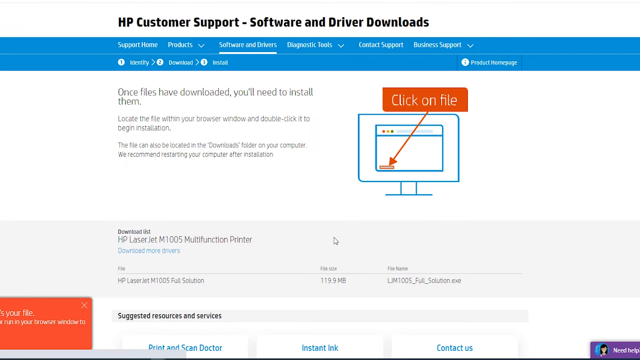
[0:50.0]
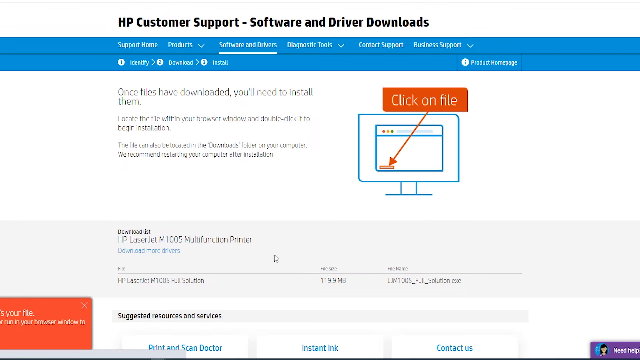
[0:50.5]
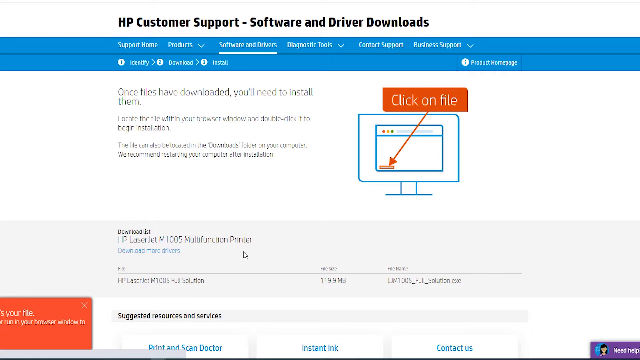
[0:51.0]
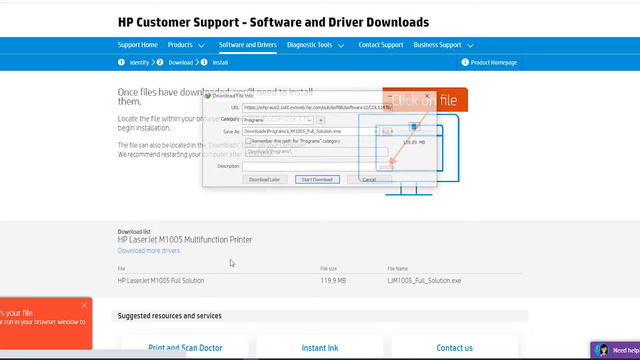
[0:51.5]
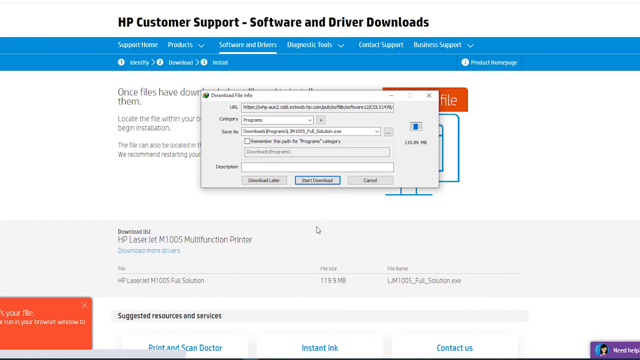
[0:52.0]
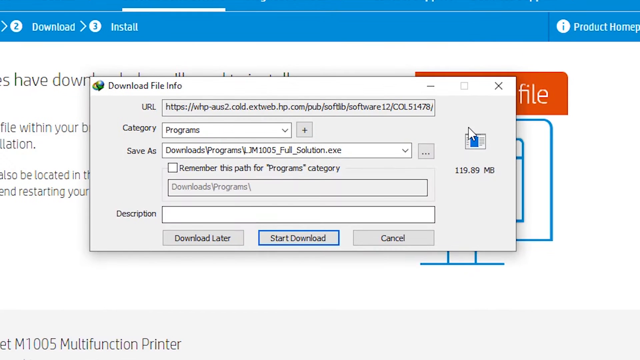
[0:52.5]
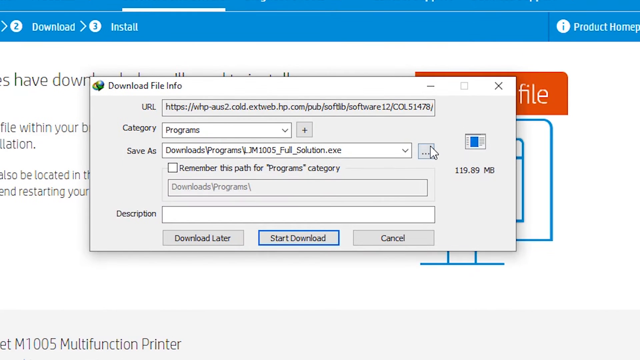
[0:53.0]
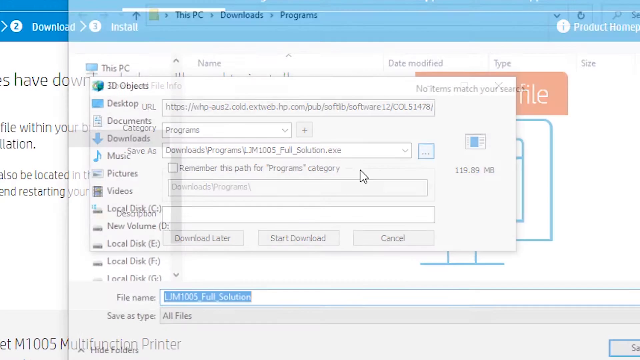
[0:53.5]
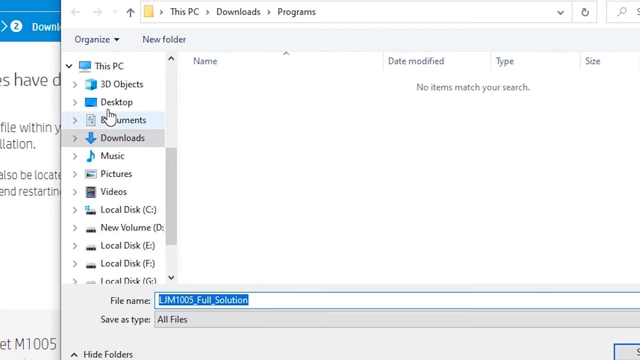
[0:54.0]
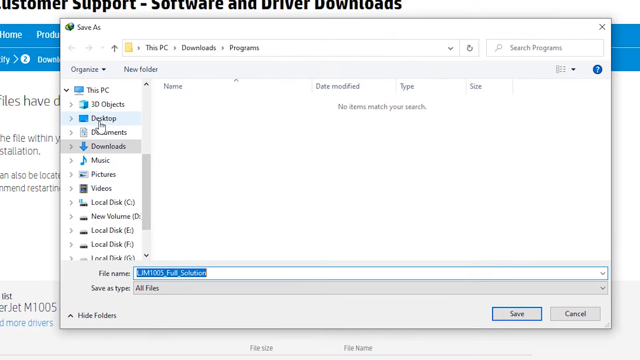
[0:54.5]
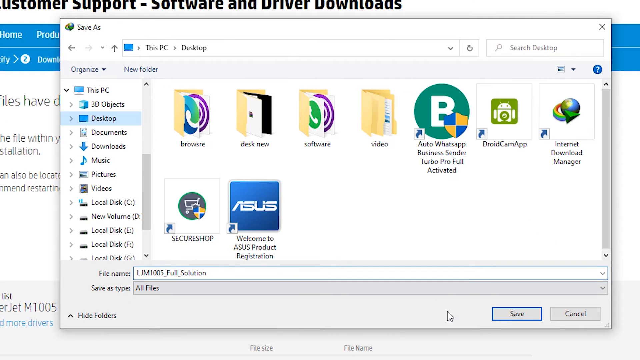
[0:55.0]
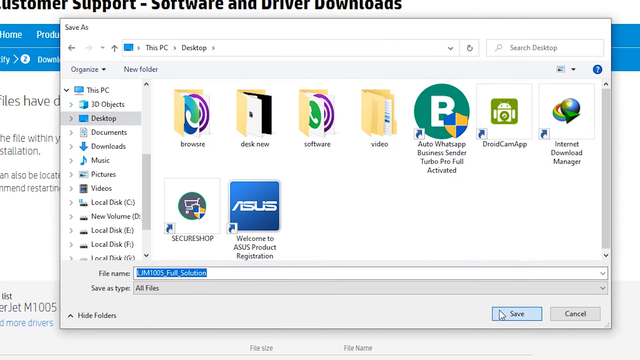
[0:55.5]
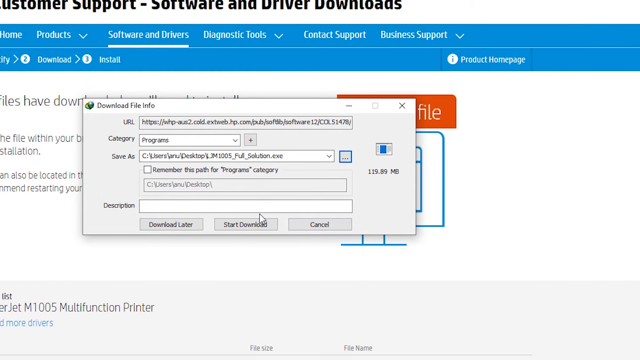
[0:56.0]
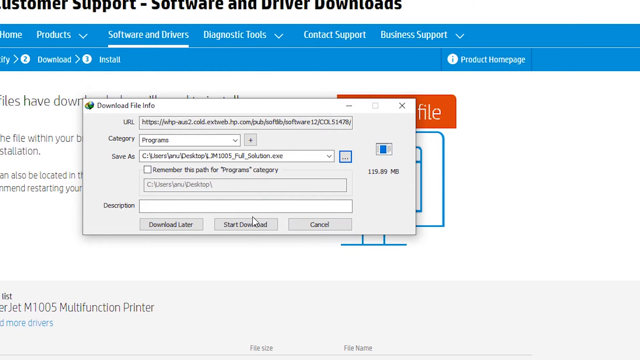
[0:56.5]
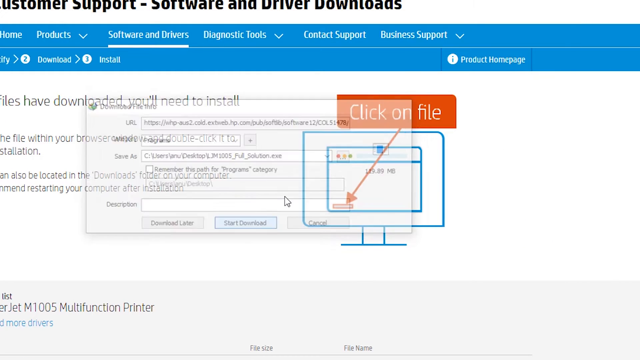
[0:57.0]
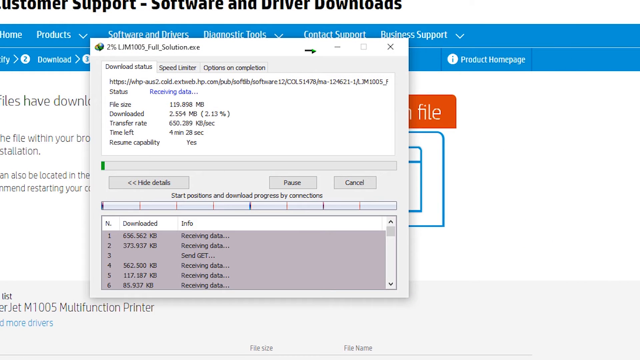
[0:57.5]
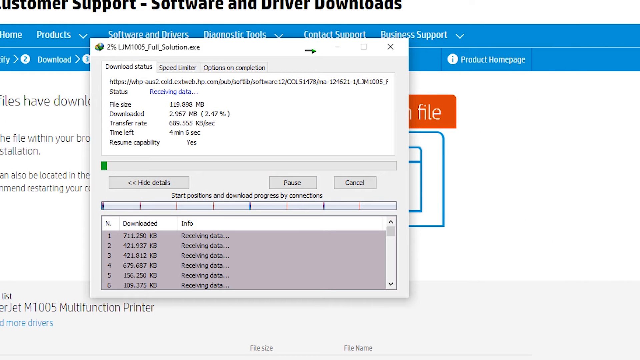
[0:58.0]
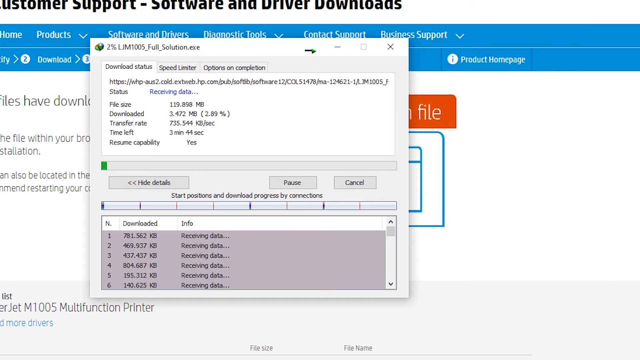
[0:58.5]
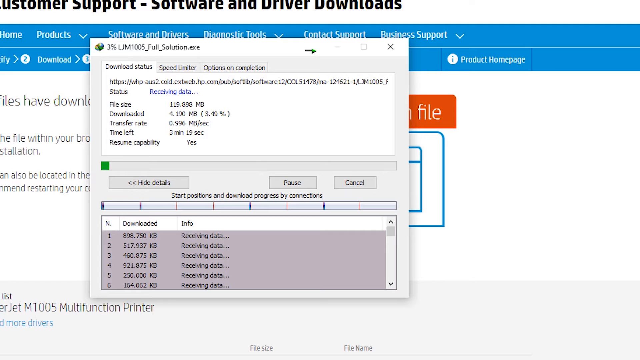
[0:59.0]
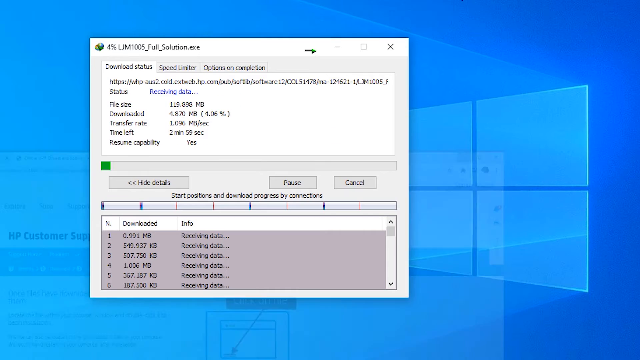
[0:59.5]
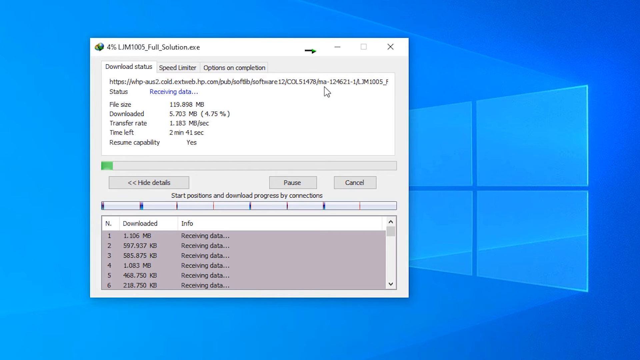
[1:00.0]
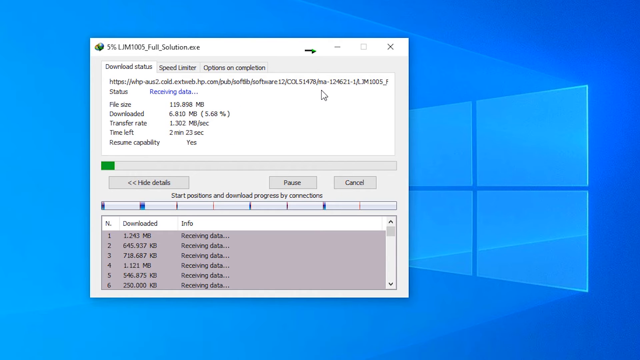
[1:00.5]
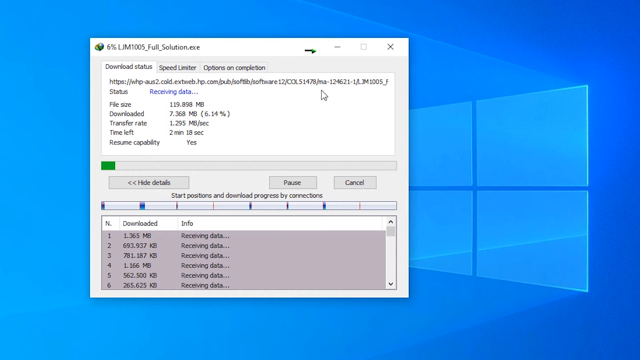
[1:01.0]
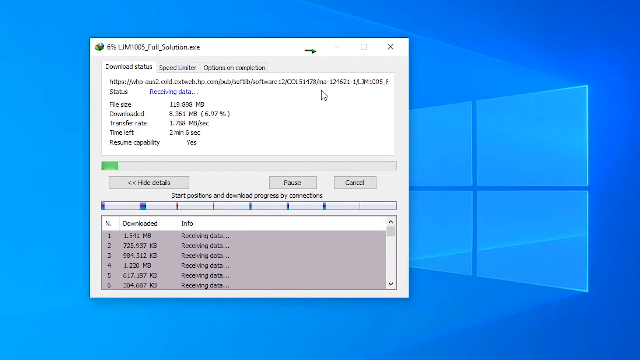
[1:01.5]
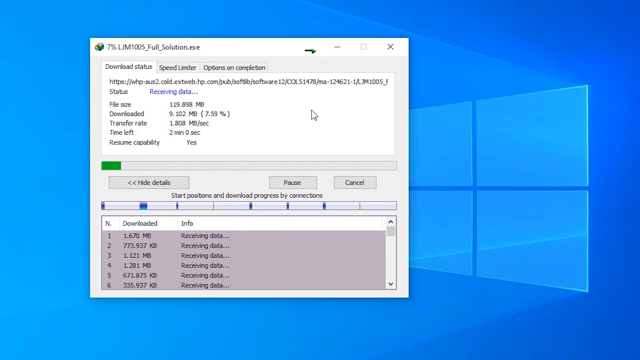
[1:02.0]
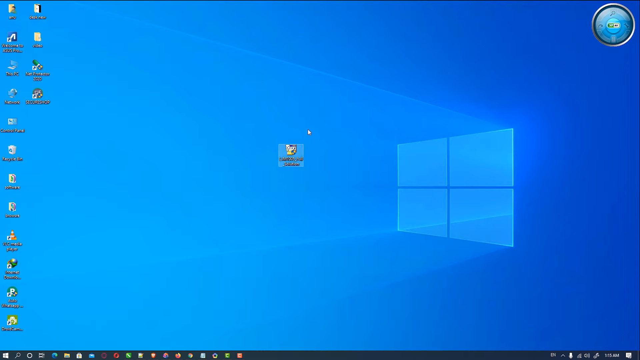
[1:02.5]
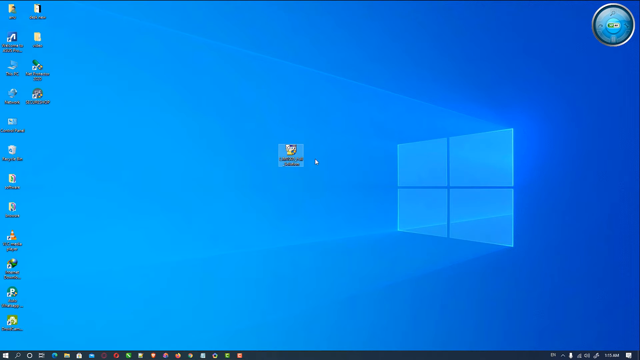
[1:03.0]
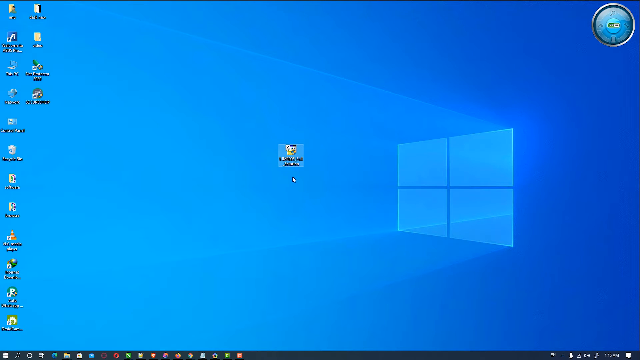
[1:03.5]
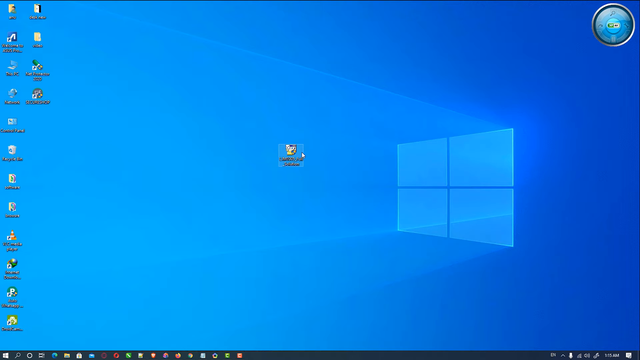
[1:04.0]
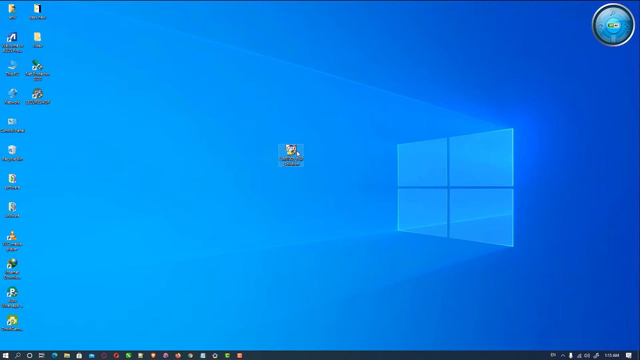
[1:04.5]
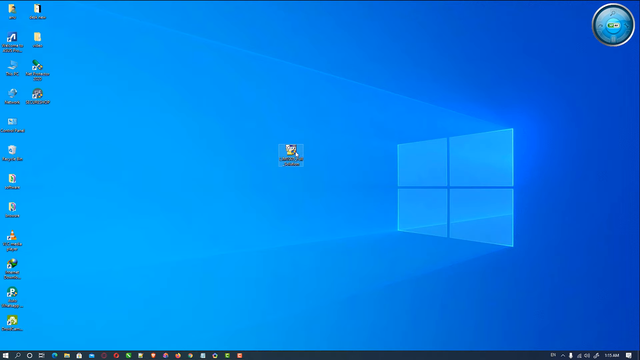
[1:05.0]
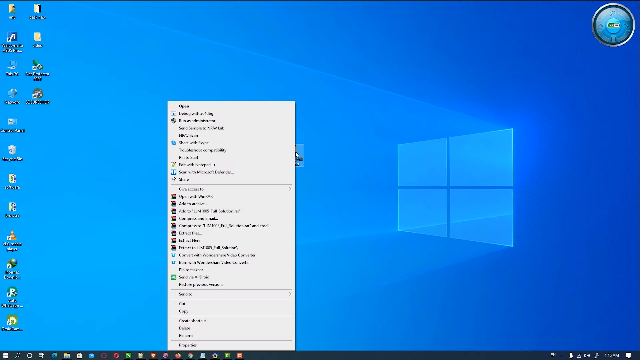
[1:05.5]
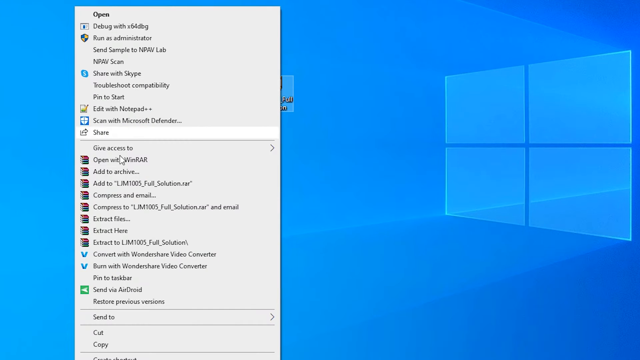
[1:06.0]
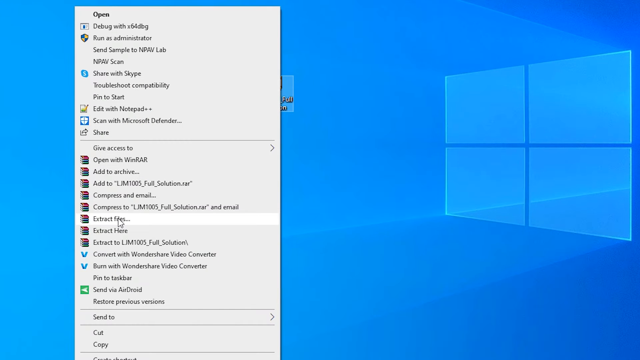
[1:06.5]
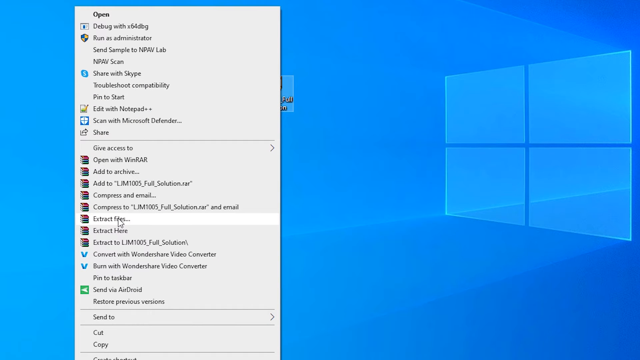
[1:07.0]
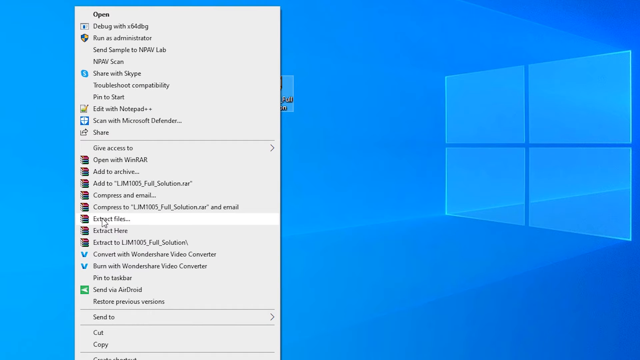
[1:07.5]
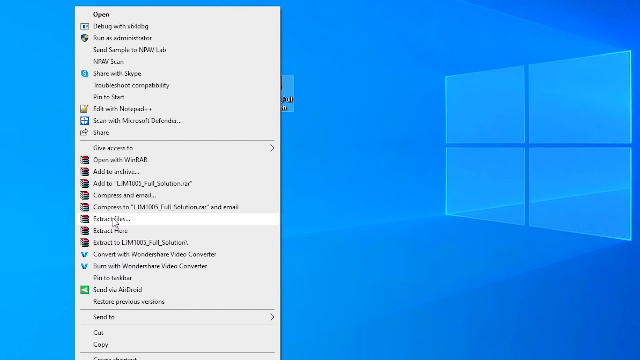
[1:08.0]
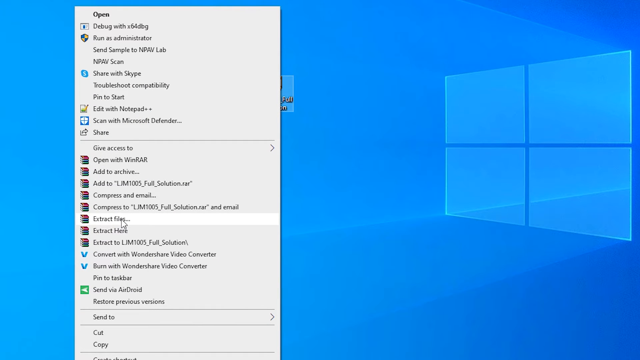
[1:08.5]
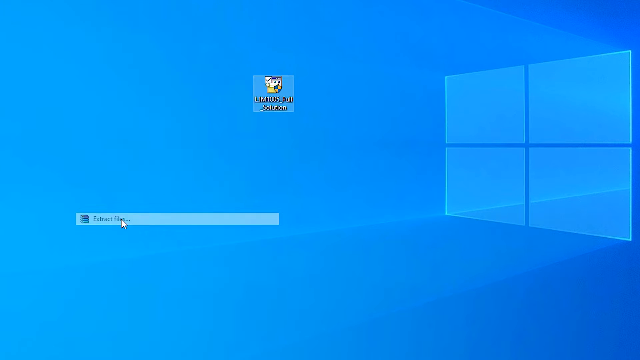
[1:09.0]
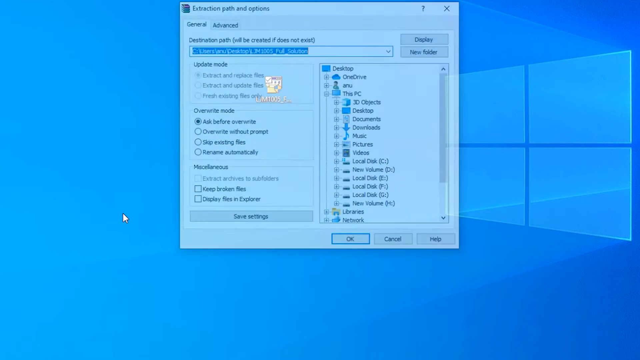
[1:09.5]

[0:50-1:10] The video, a little wider than it is tall, shows an HP page. It begins on the blue bar at the very top, in HP blue, holding the menu options. Below, on the main screen, black text on a white background reads: "once files have downloaded, you'll need to install them. Locate the file within your browser window and double-click it to begin installation. The file can also be located in the downloads folder on your computer. We recommend restarting your computer after installation." To the right of that is an example of the computer done in blue. The download button then appears to be clicked. A window pops up with "download file info" at the very top, containing a URL, a category, a save as location and a description box, plus three buttons at the bottom: "download later", "start download" and "cancel". Save as is chosen, and a save as window pops up with navigation on the left; the hand cursor apparently hovers over desktop and clicks it.